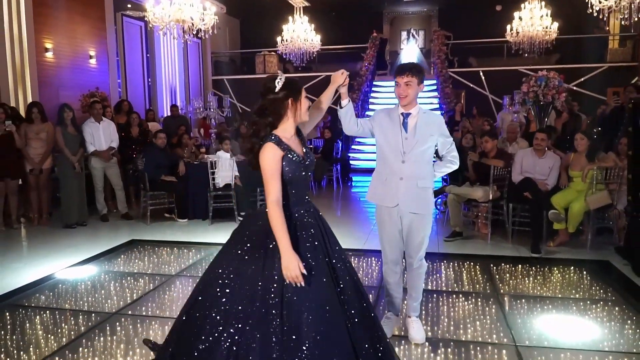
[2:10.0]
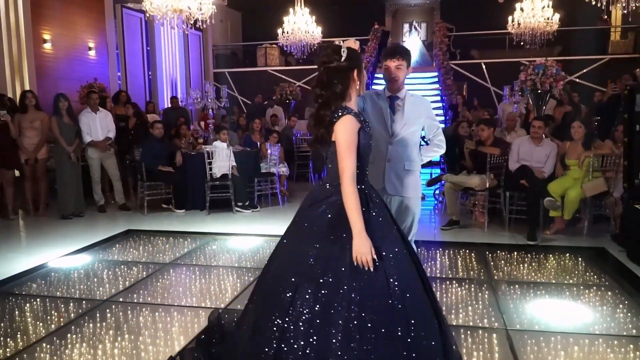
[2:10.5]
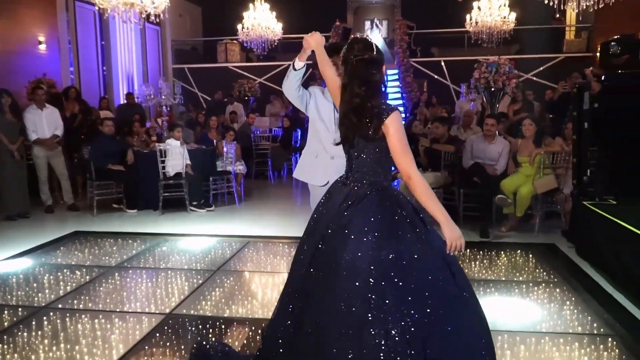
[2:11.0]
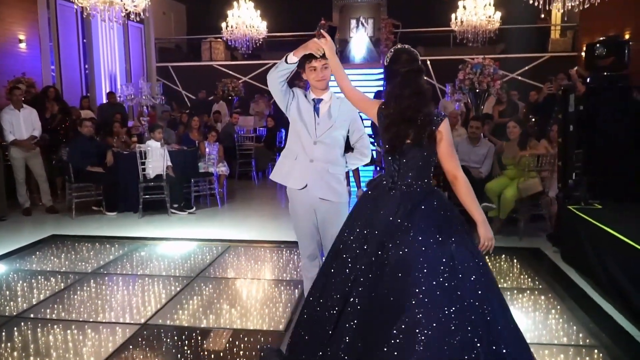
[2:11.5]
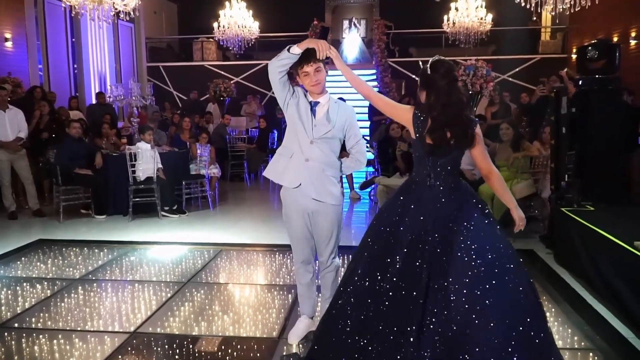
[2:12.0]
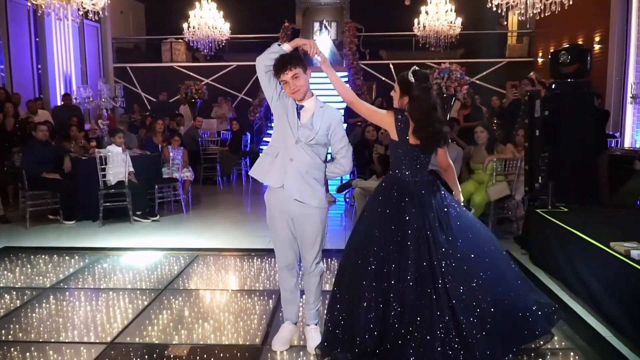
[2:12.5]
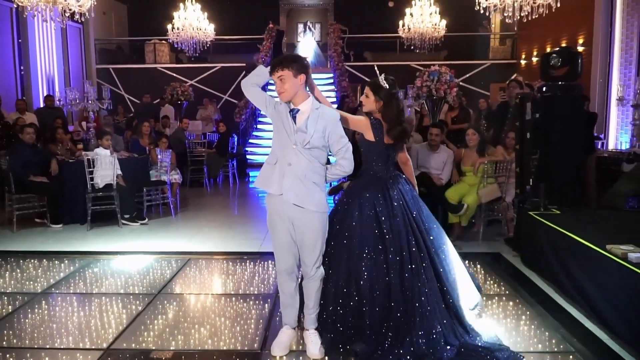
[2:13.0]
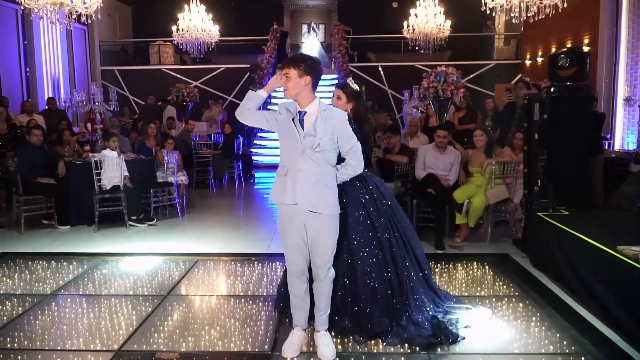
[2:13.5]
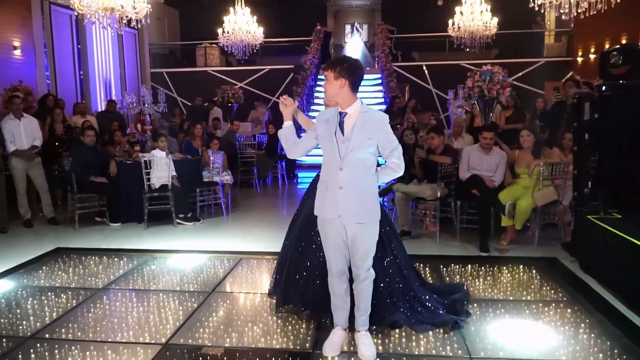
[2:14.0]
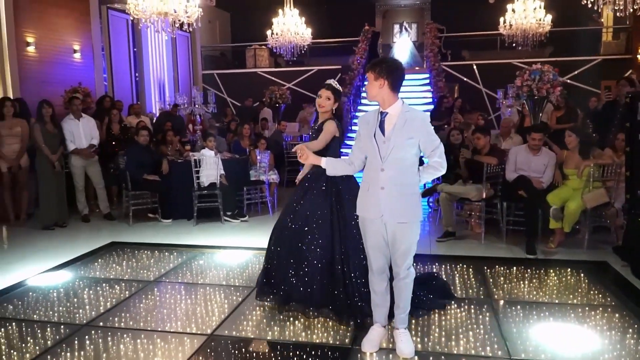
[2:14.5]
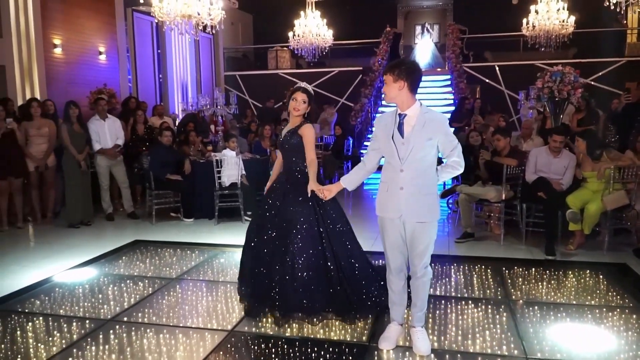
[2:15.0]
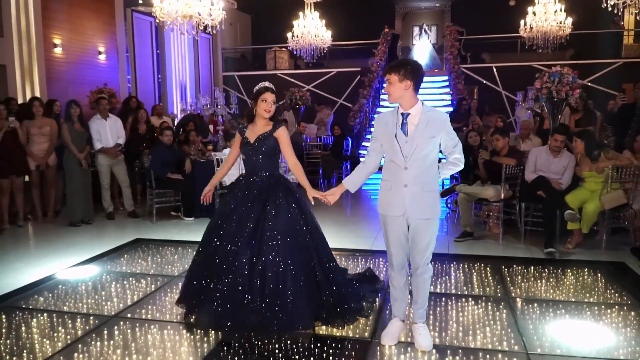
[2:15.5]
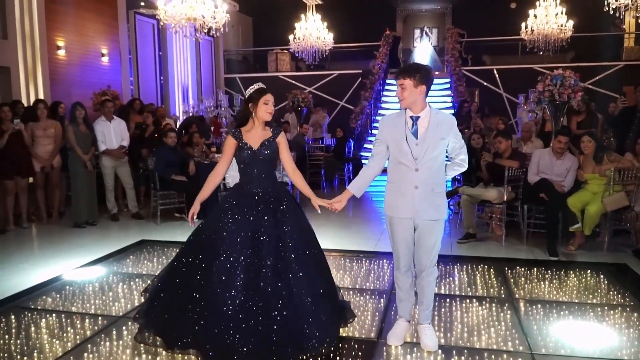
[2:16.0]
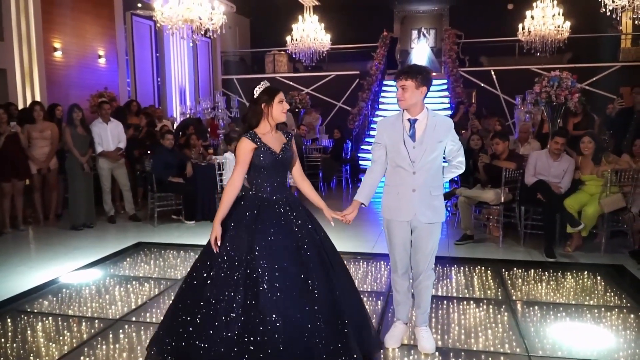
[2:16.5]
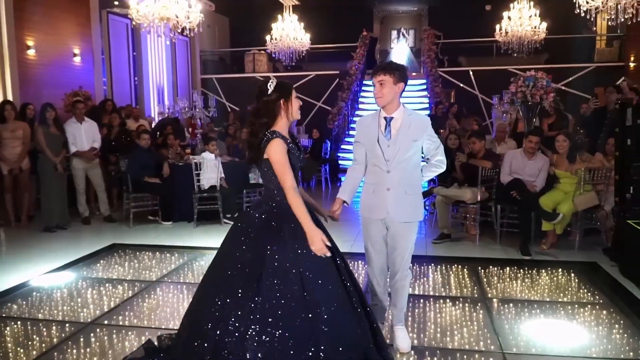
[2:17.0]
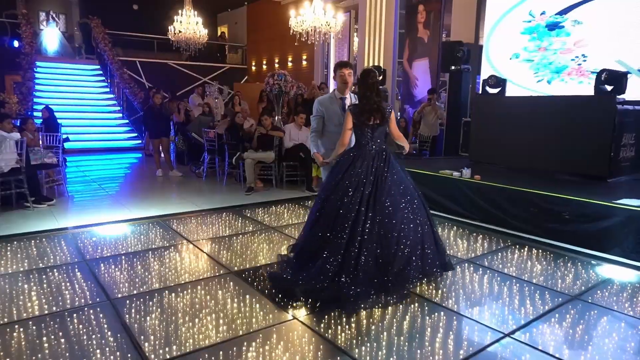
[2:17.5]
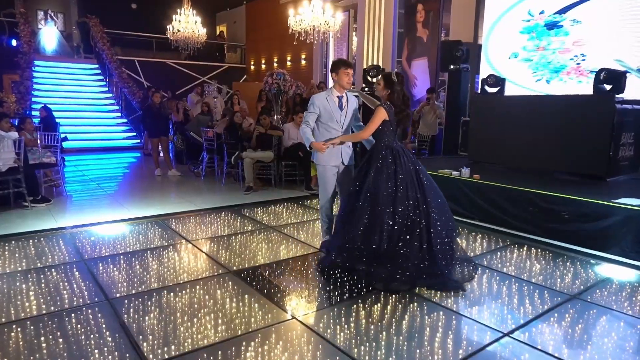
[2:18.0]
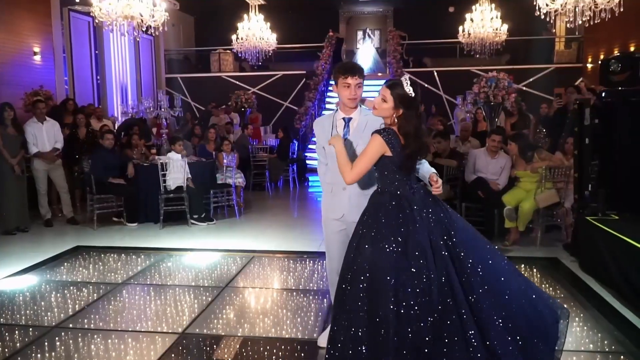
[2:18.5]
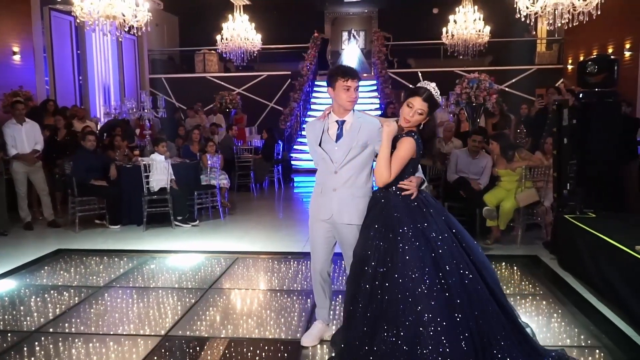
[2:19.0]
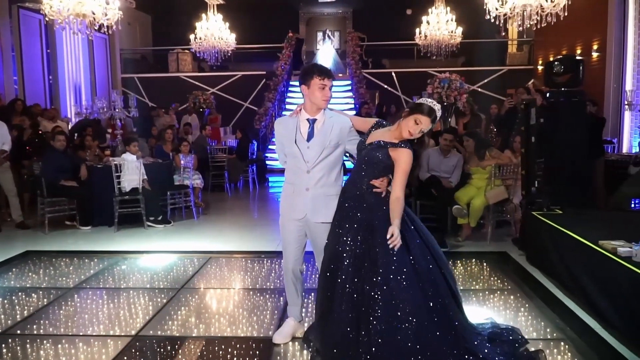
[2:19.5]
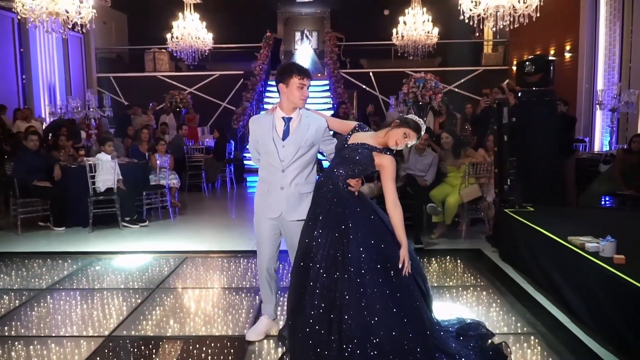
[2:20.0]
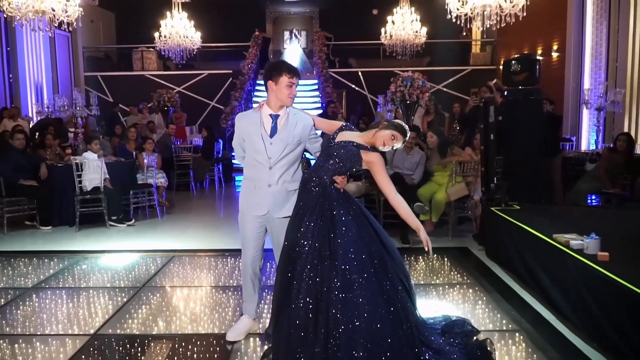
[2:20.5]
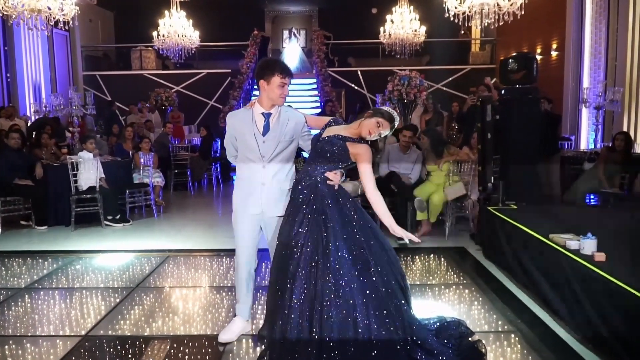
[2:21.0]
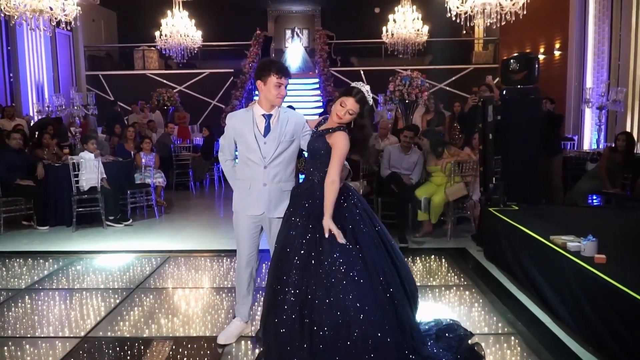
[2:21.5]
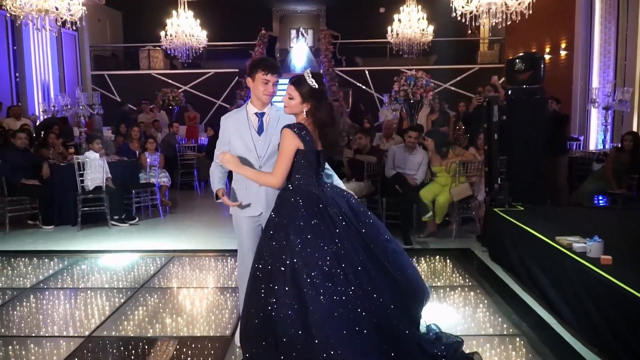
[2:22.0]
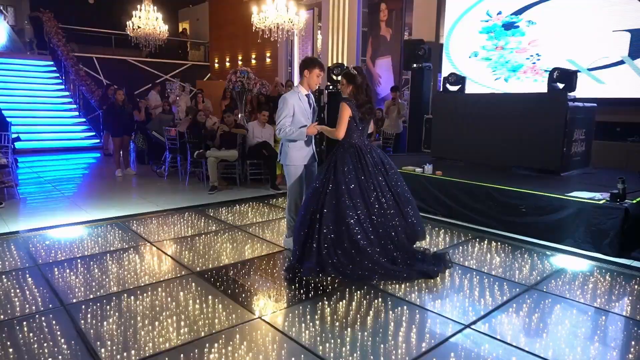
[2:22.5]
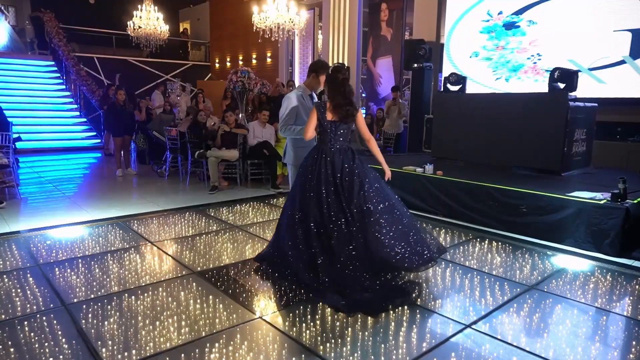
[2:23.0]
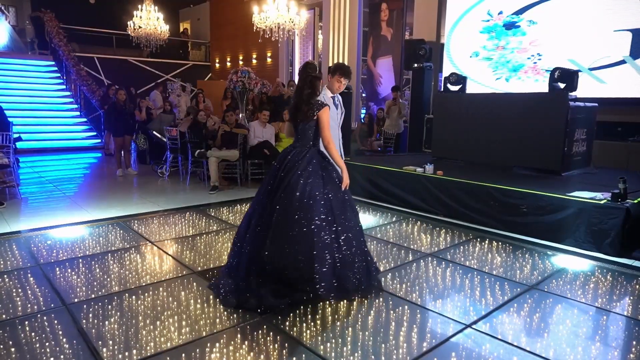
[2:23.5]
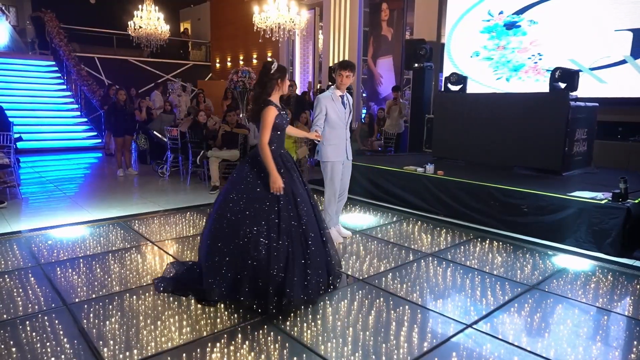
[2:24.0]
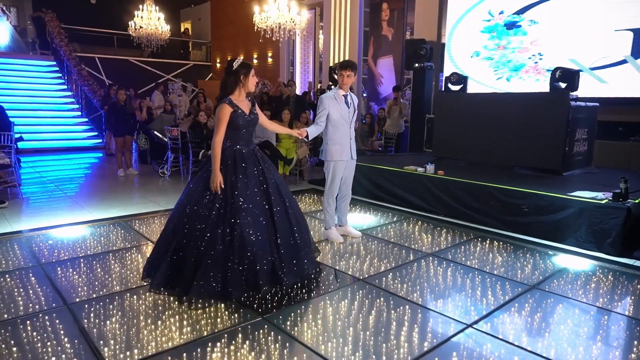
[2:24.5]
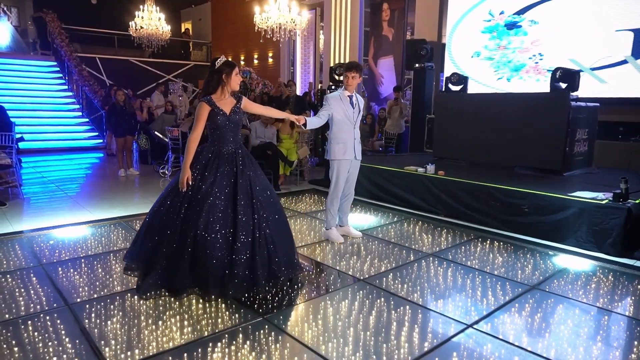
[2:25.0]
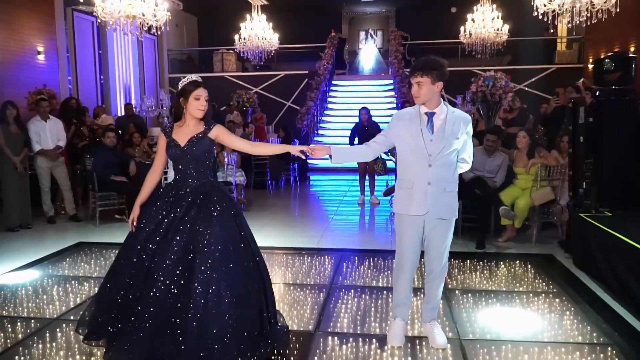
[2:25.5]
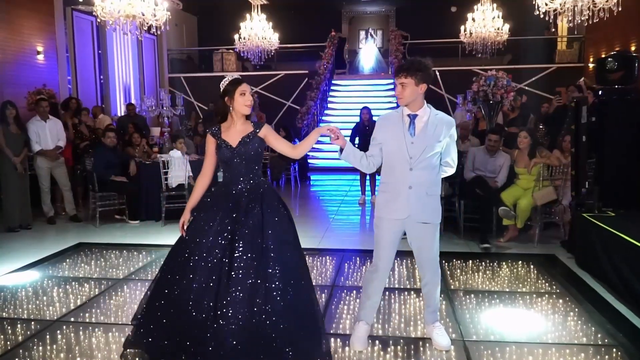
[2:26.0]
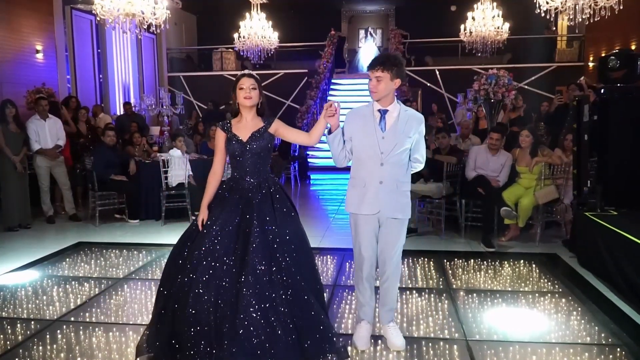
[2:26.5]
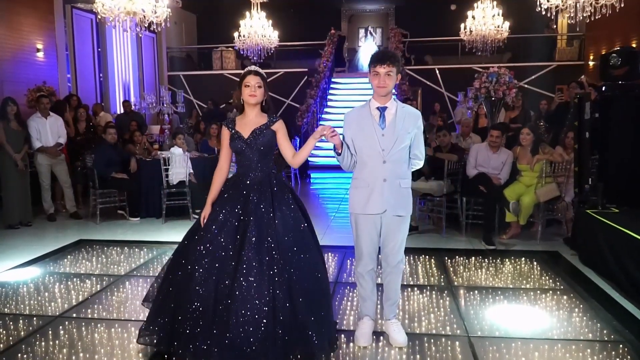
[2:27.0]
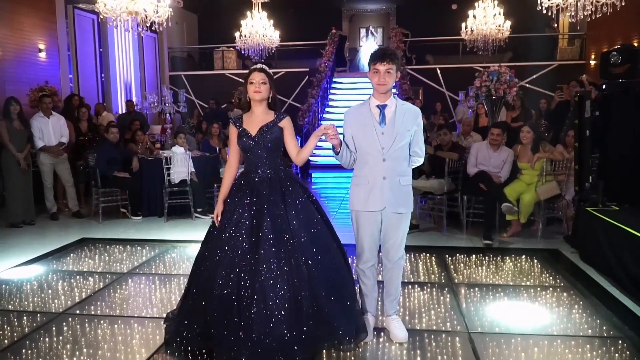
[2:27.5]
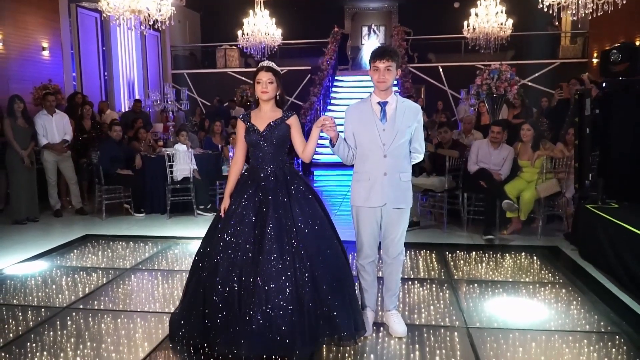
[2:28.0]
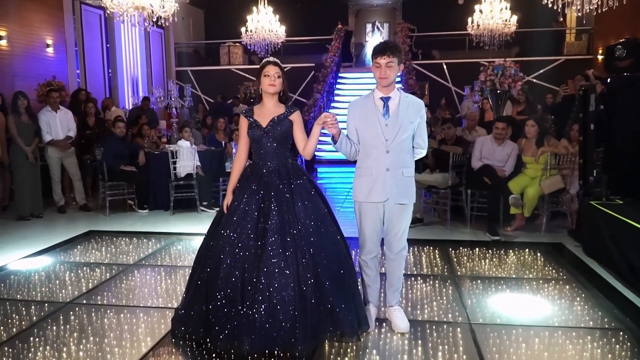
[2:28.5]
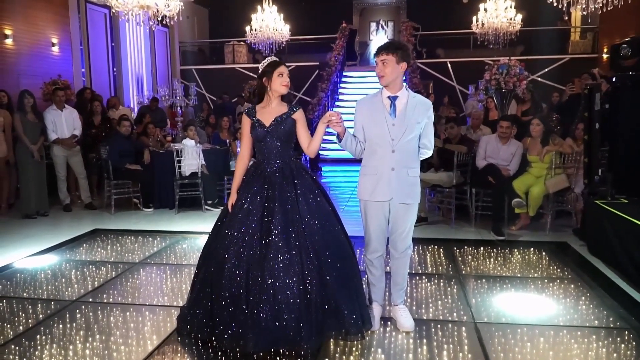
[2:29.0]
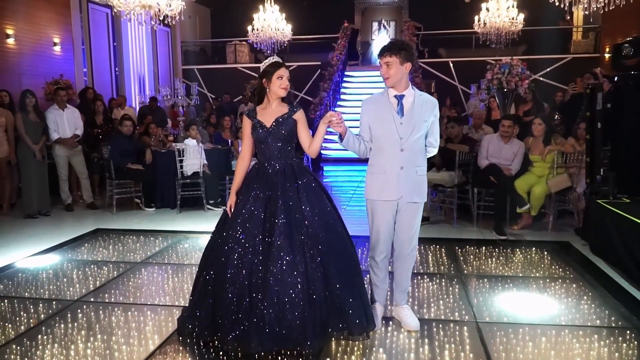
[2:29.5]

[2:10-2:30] The young couple dances on the lighted stage in the middle of a small ballroom-style room. To the right of the stage is an elevated stage that looks like it has some equipment on it, possibly for a DJ. The couple is probably between 18 and 20 or 21. A crowd of several dozen people surrounds them, probably family and friends. The boy wears a light blue, baby blue suit, and the girl wears a very long, flowing dark blue gown, so their colors match in light and dark.